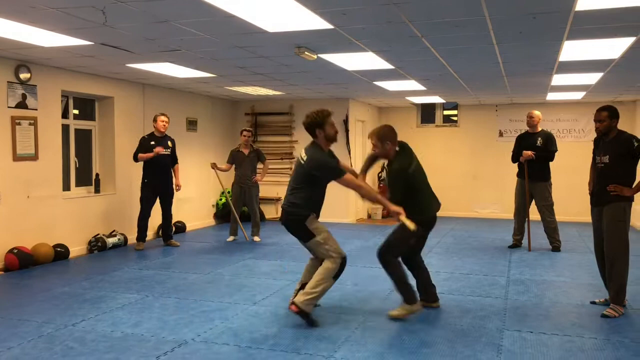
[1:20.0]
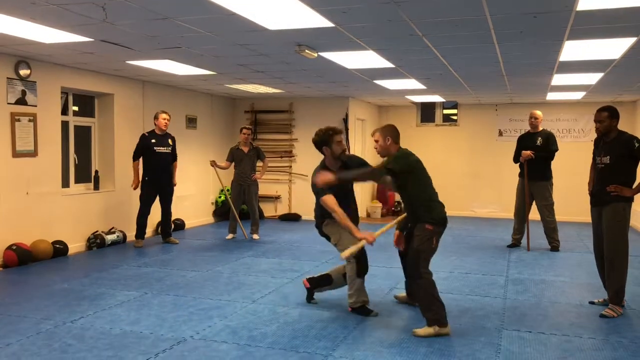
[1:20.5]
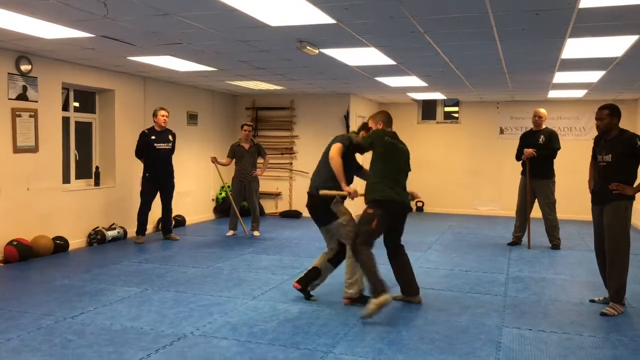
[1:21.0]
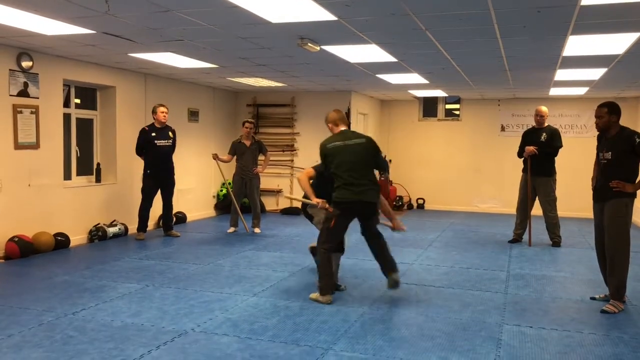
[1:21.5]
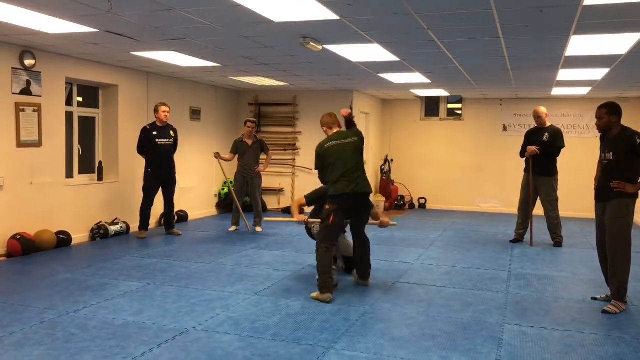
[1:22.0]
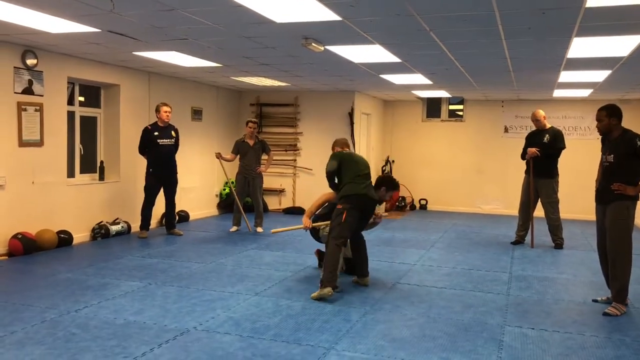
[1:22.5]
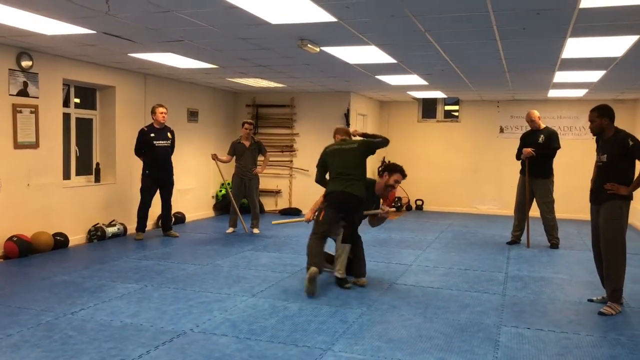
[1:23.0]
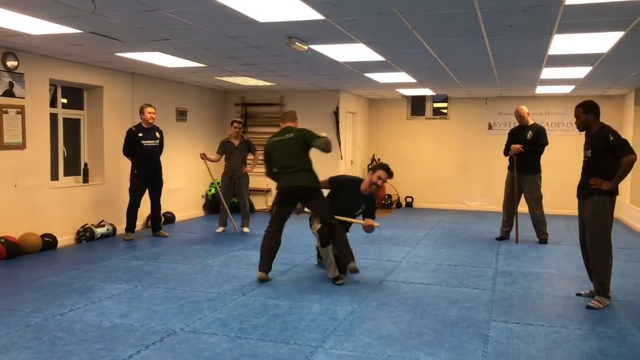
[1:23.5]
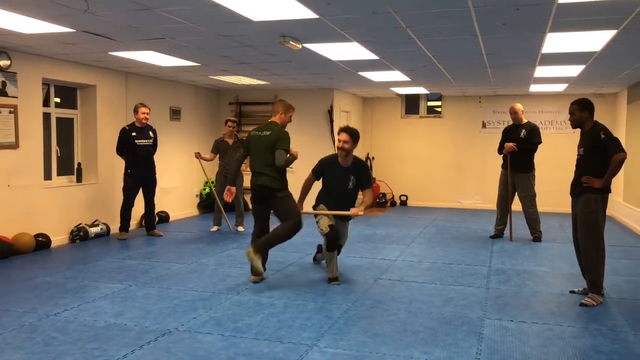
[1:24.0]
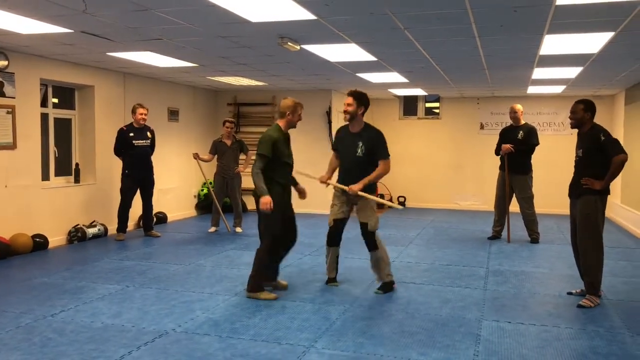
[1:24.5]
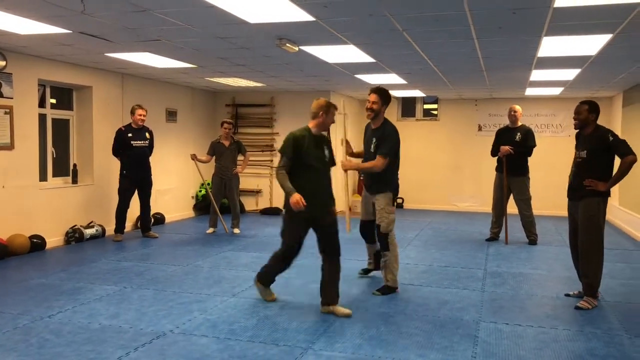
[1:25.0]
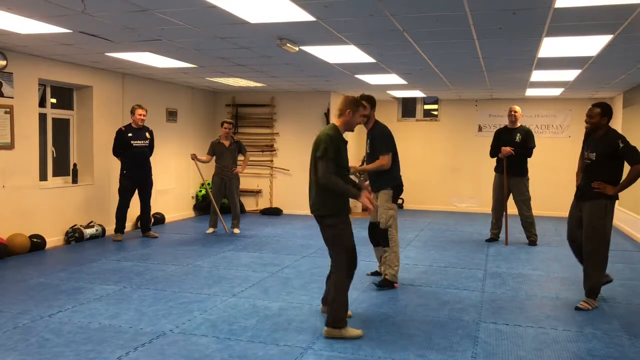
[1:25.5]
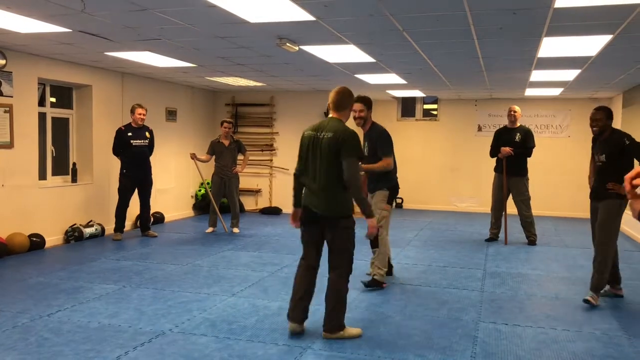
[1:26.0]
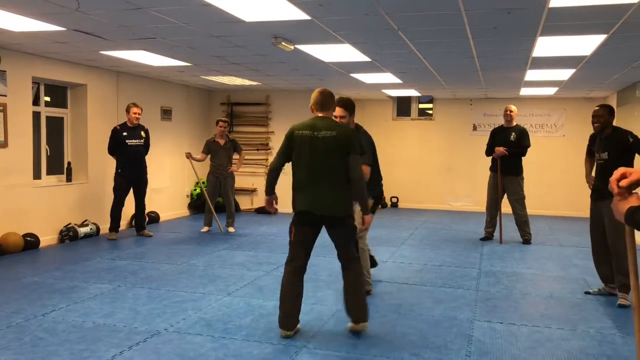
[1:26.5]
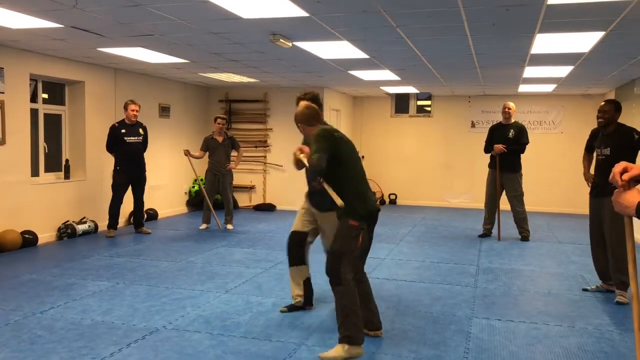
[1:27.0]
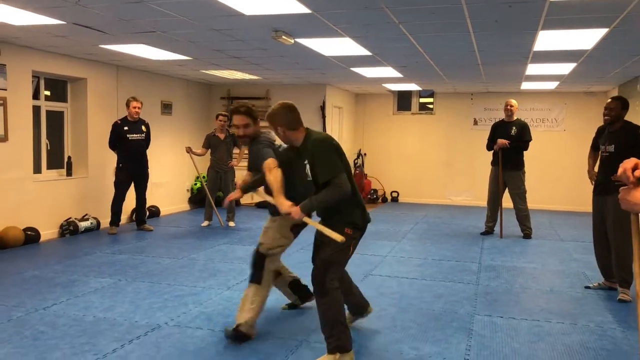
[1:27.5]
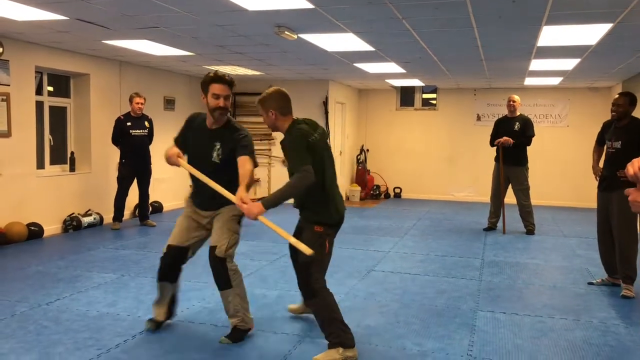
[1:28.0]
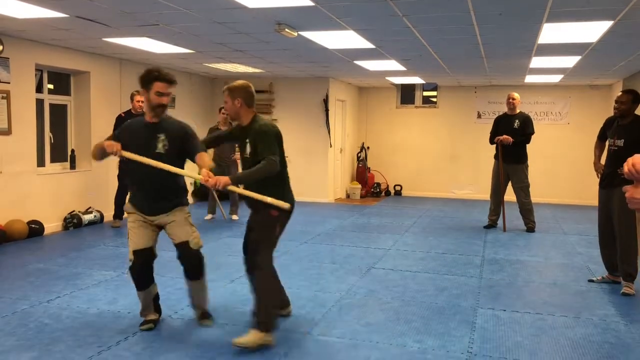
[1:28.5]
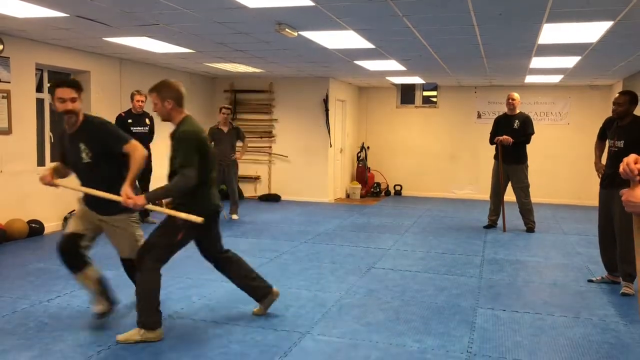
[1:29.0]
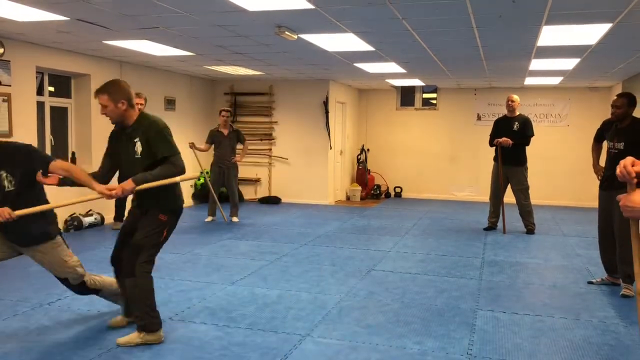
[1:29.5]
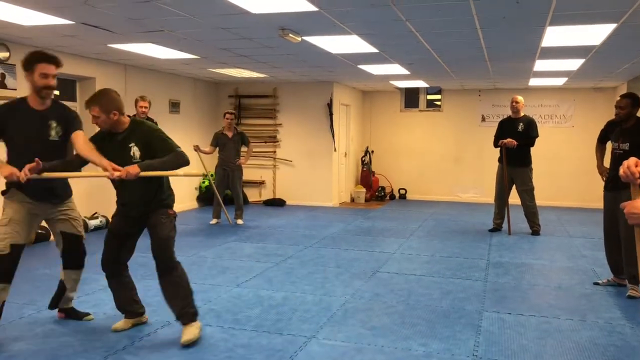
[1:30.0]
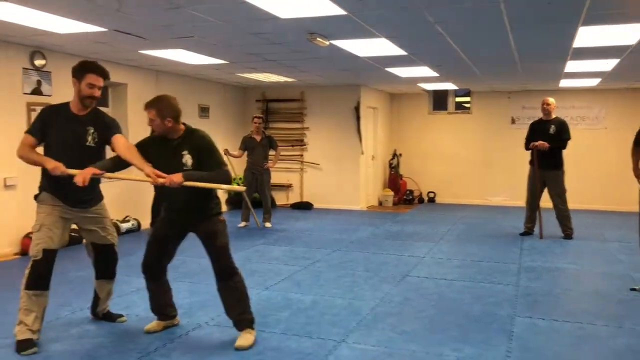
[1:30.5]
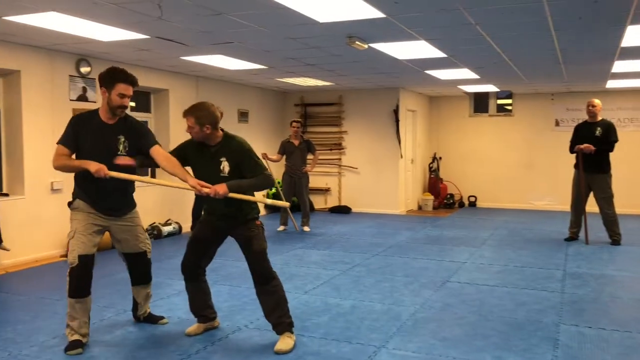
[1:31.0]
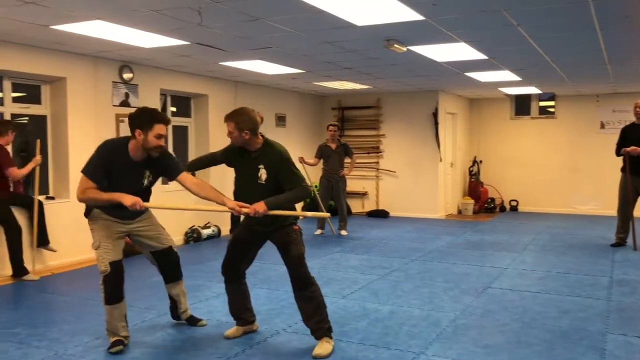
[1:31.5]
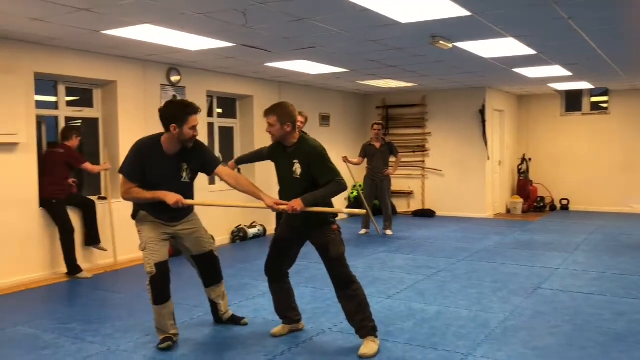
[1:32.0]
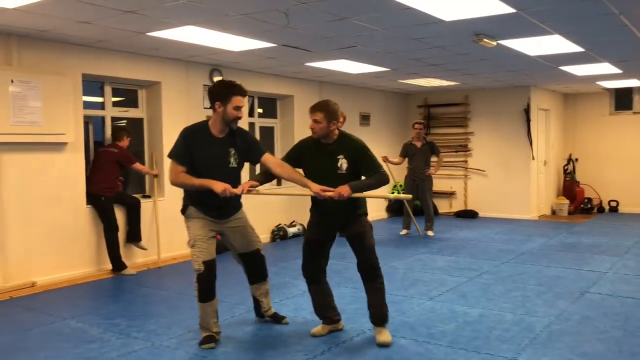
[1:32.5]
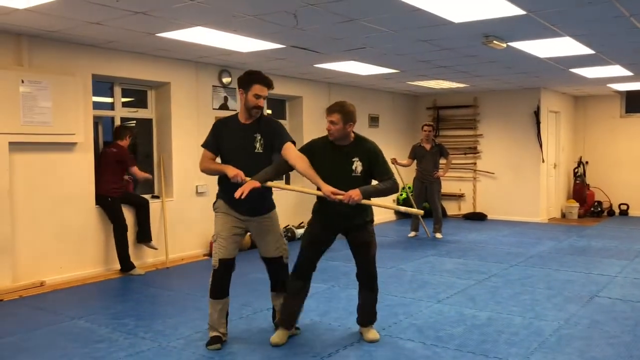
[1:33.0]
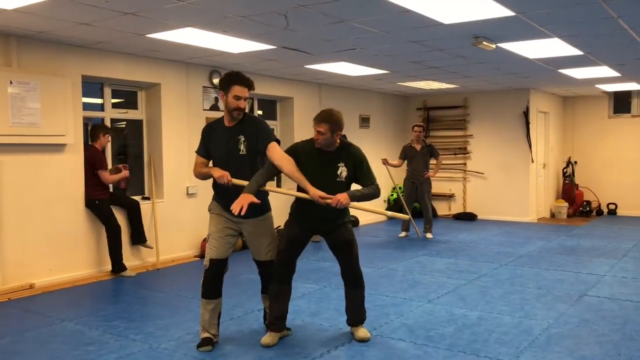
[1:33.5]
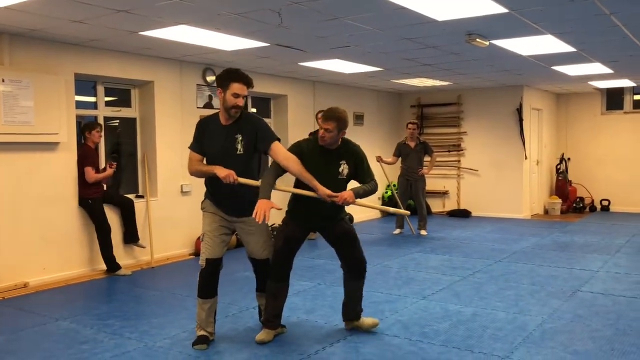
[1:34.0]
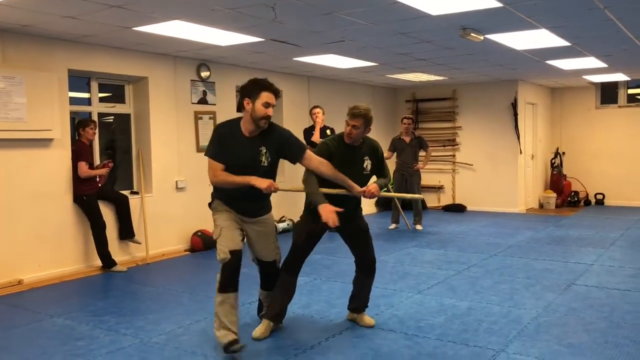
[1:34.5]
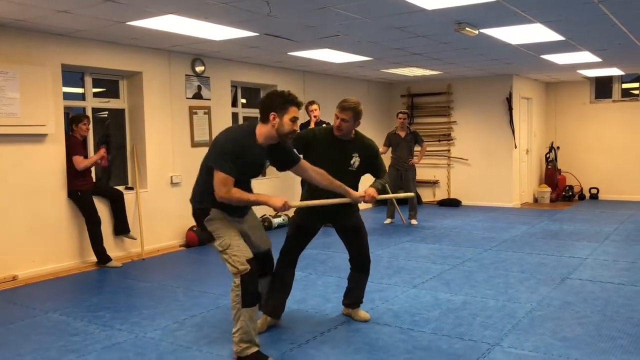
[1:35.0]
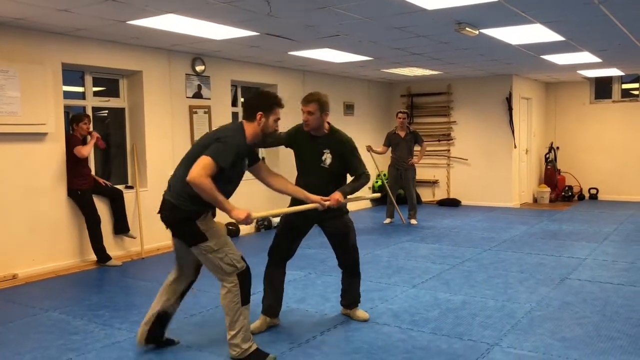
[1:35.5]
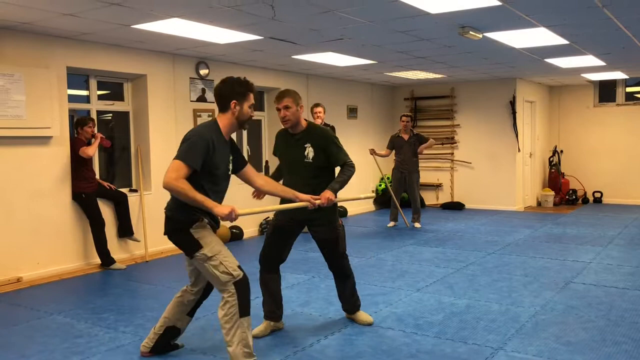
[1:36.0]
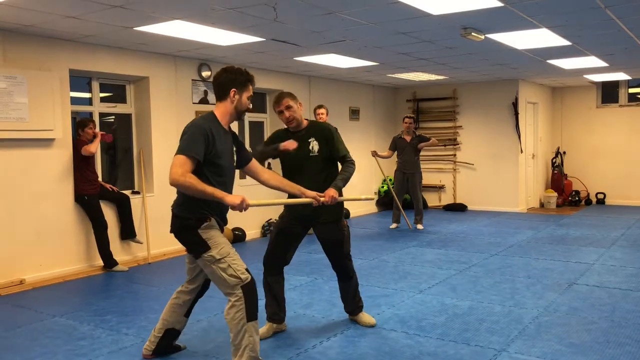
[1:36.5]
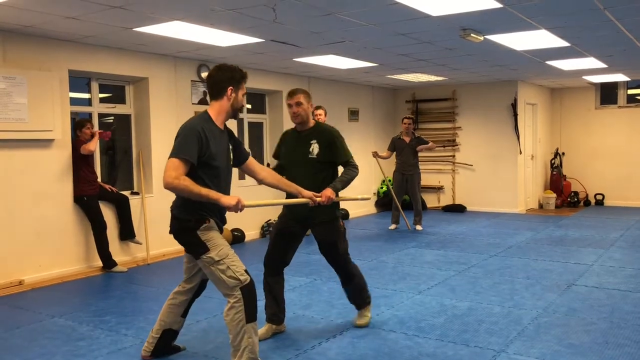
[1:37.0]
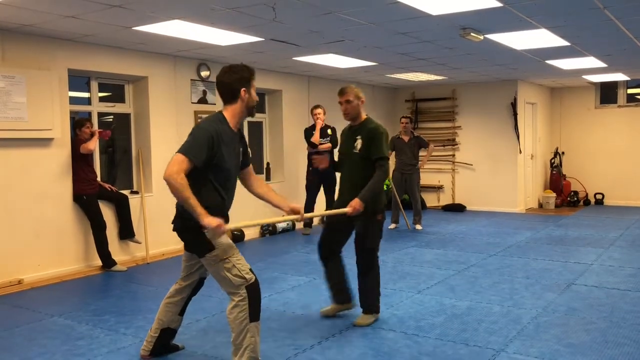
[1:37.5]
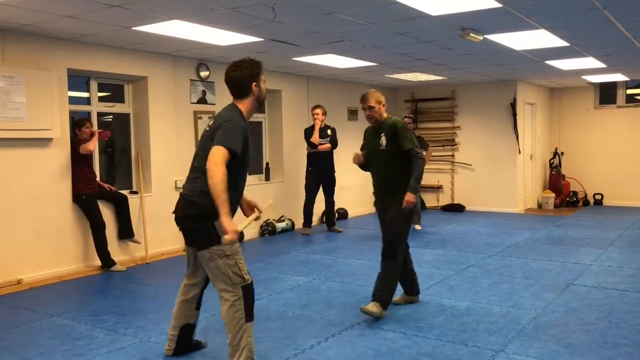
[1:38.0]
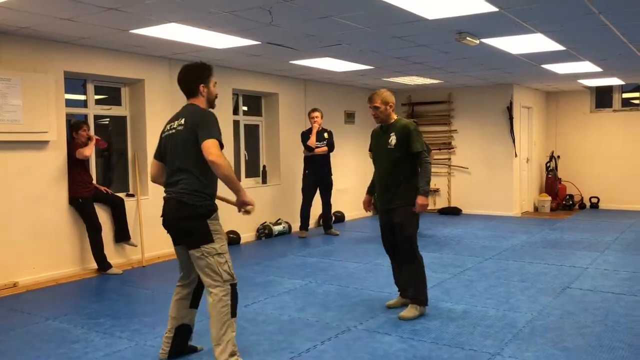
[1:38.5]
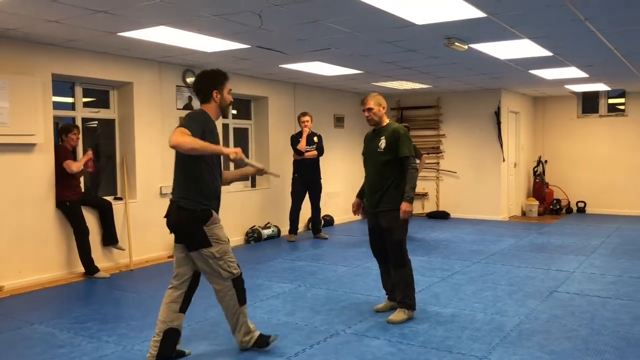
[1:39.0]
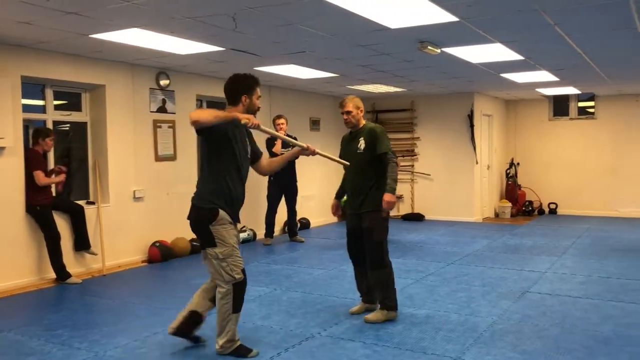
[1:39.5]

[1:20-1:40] The instructor faces the student, who holds the brown pole toward the instructor's leg area; both seem to be crouched down. The instructor has his right arm between both of the student's arms. He motions his left arm up toward the student and brings it up to swipe at the student's neck. The student crouches down, holding the pole horizontally between his hands, and the instructor elbows him in a downward motion with his right arm, his left arm on the student's shoulder. Both seem to be smiling. The instructor backs away and the student stands up, still holding the pole in both hands. They seem to reset positions, and the student holds the pole toward the instructor as if to stab or poke him with it. The instructor grabs the pole with his left arm and begins to pull it, pulling the student forward.